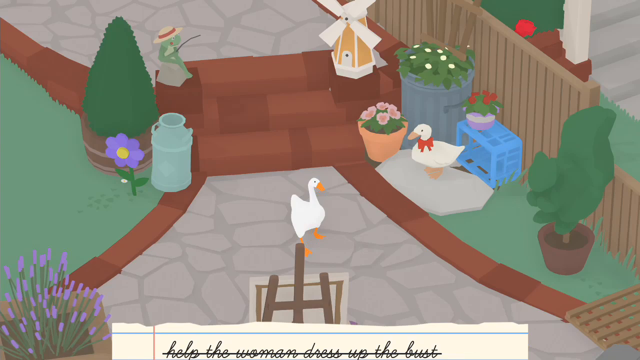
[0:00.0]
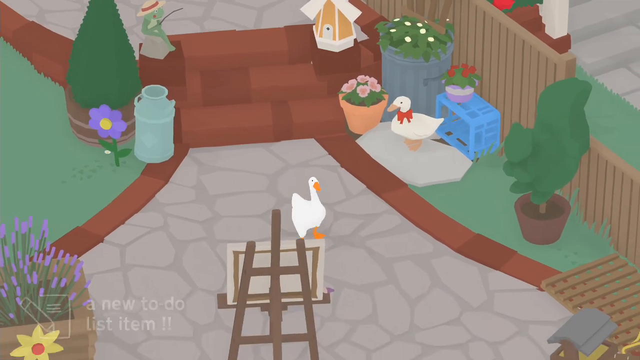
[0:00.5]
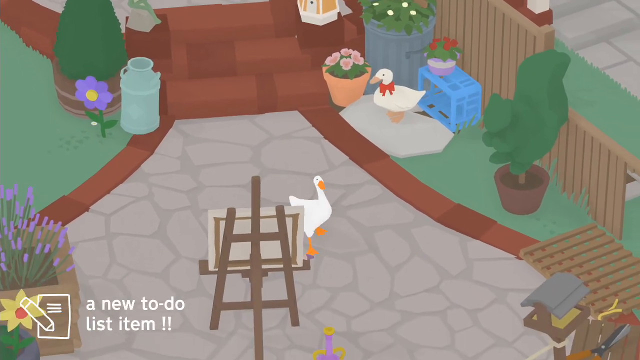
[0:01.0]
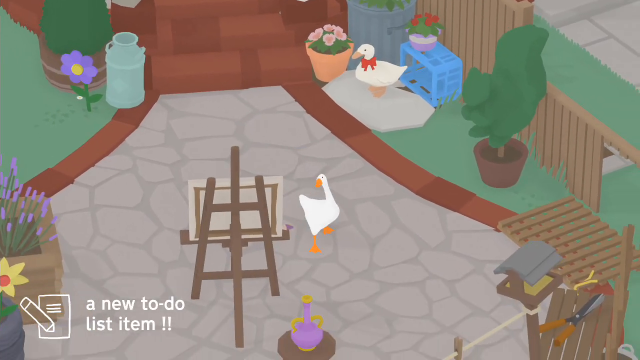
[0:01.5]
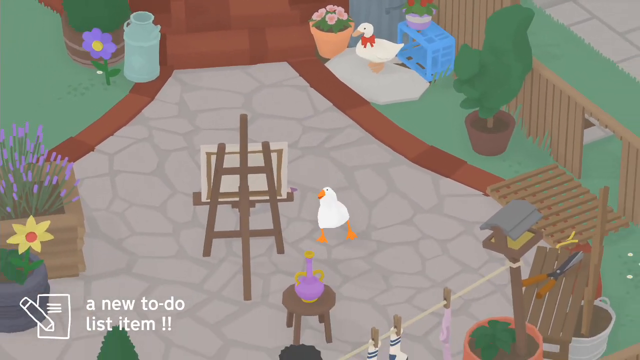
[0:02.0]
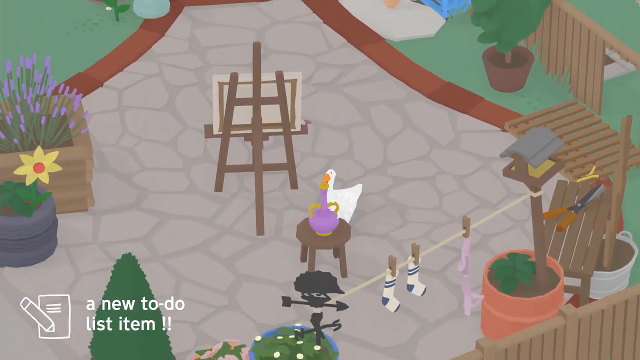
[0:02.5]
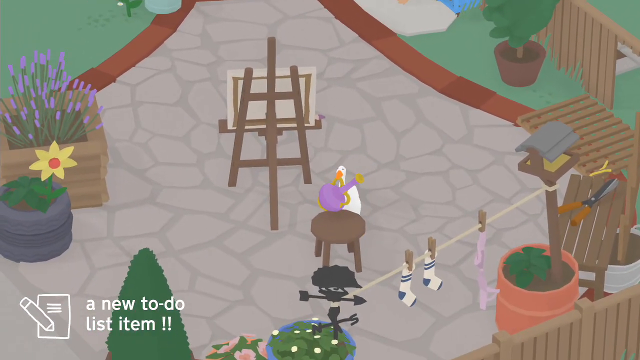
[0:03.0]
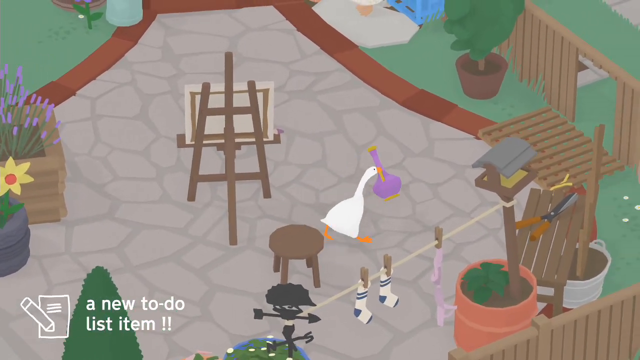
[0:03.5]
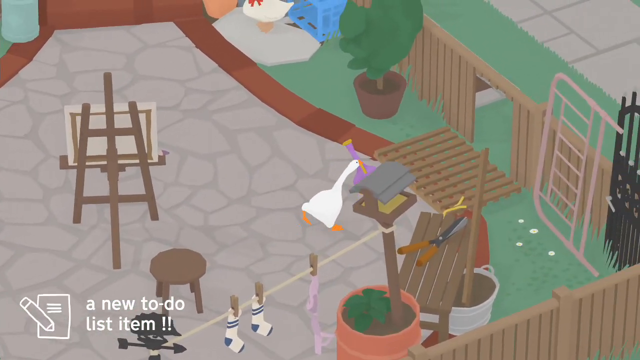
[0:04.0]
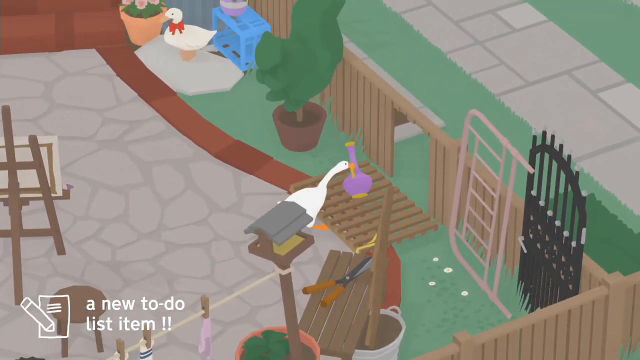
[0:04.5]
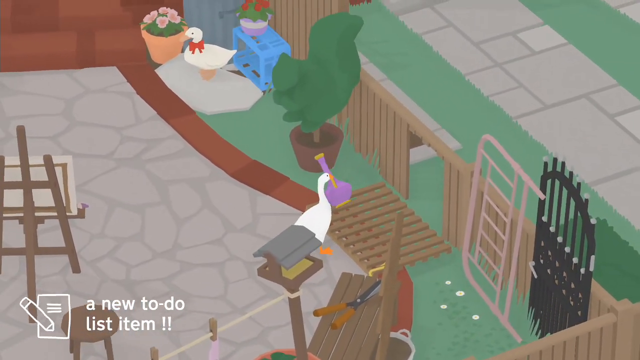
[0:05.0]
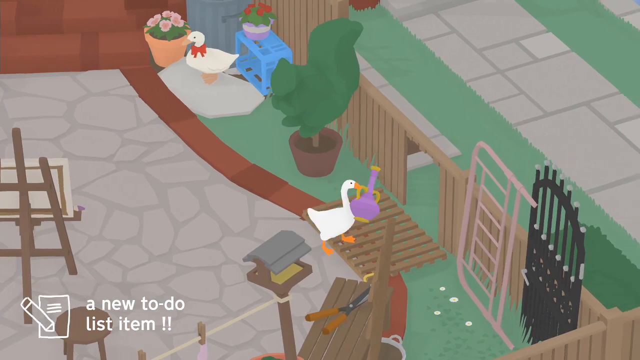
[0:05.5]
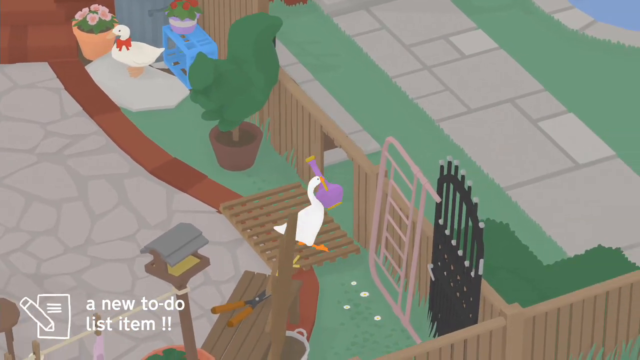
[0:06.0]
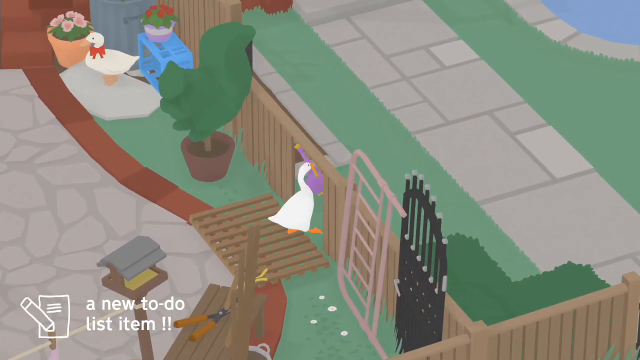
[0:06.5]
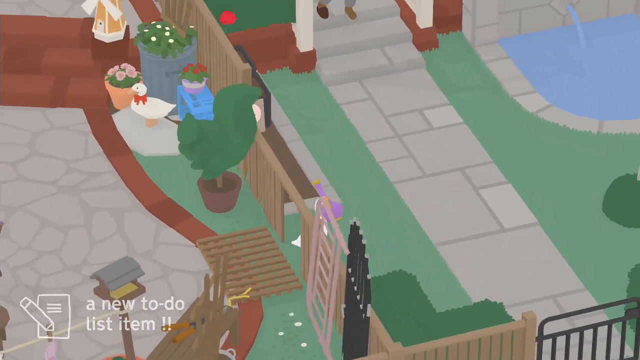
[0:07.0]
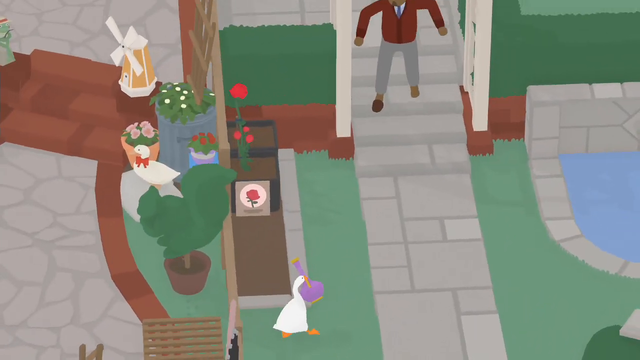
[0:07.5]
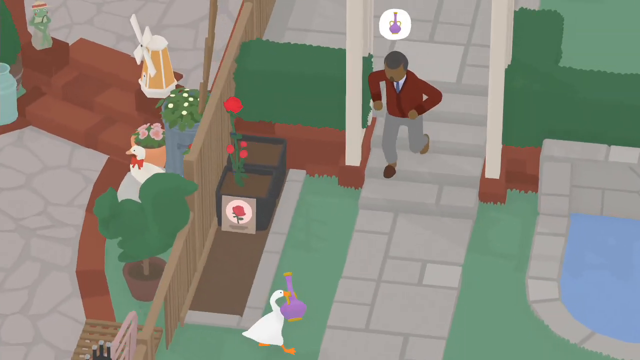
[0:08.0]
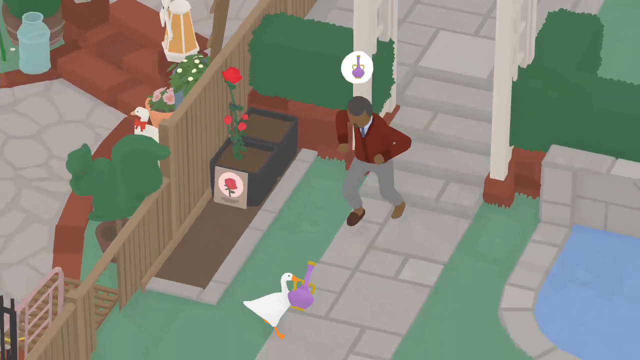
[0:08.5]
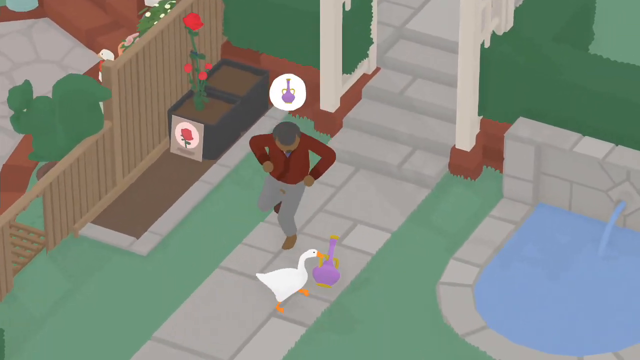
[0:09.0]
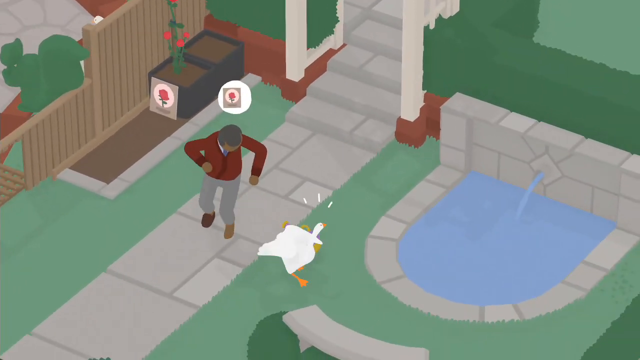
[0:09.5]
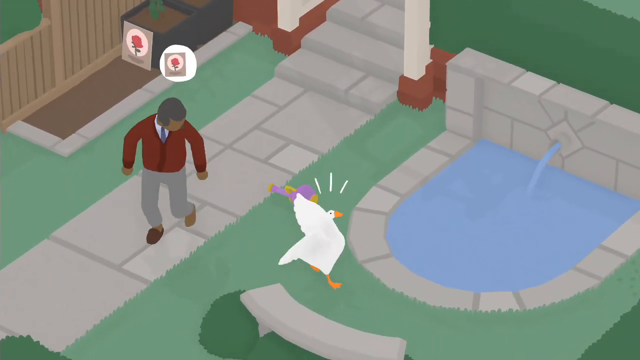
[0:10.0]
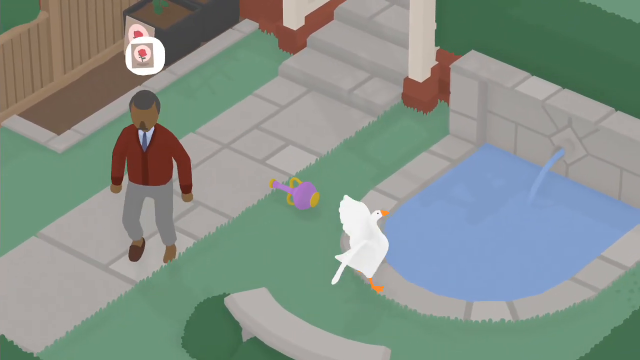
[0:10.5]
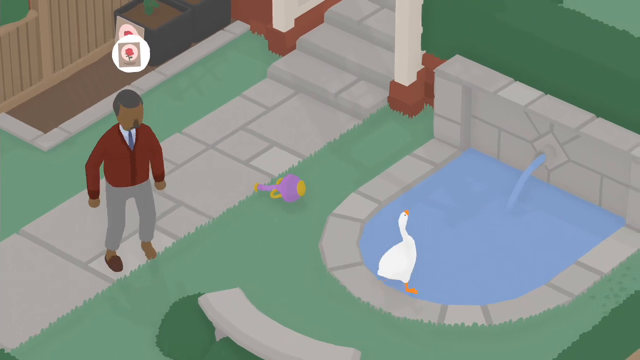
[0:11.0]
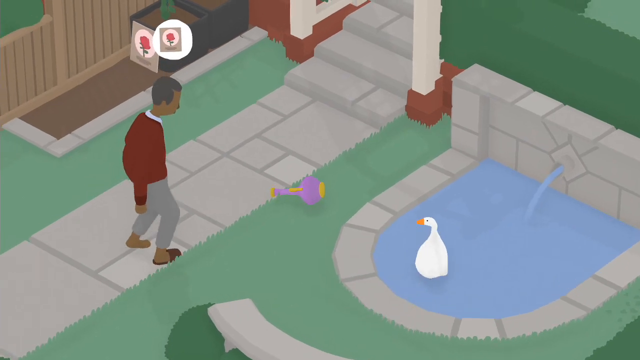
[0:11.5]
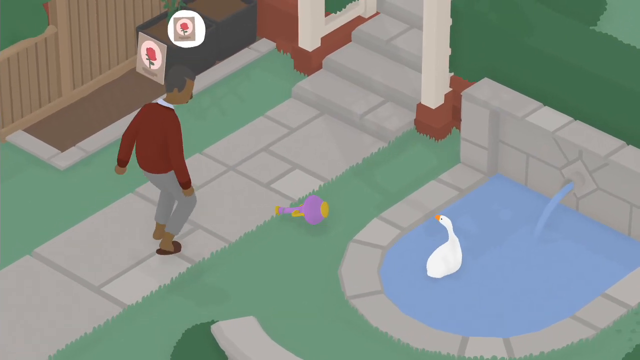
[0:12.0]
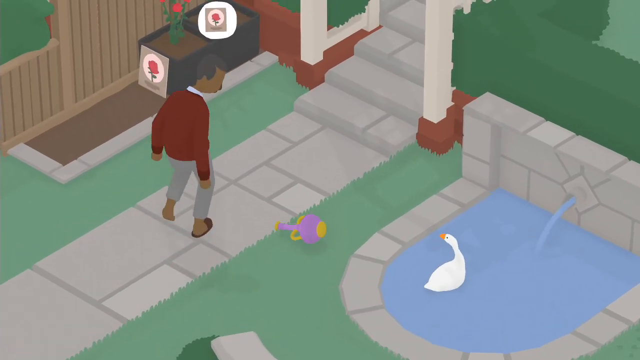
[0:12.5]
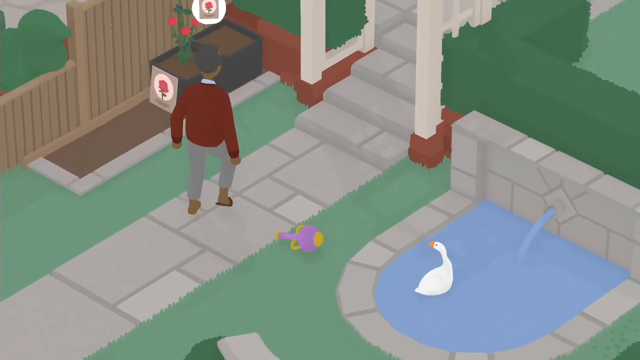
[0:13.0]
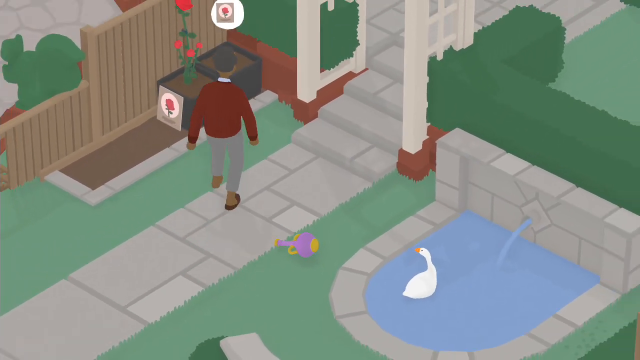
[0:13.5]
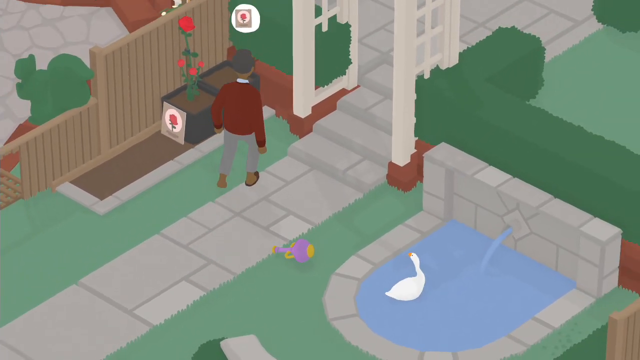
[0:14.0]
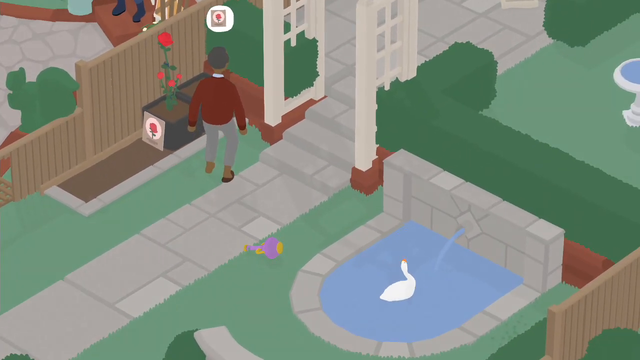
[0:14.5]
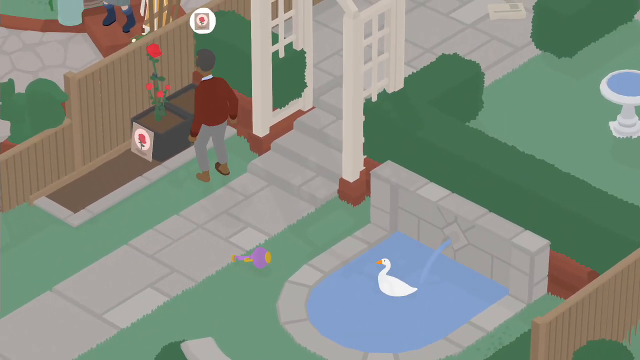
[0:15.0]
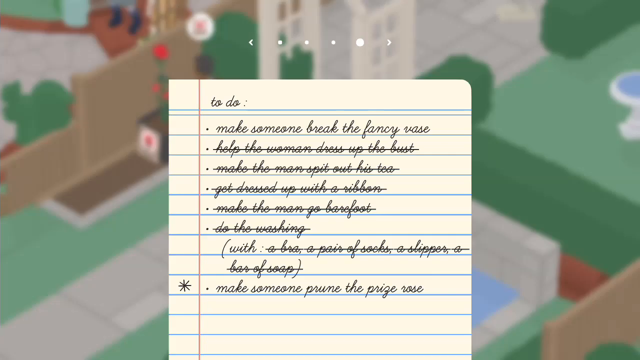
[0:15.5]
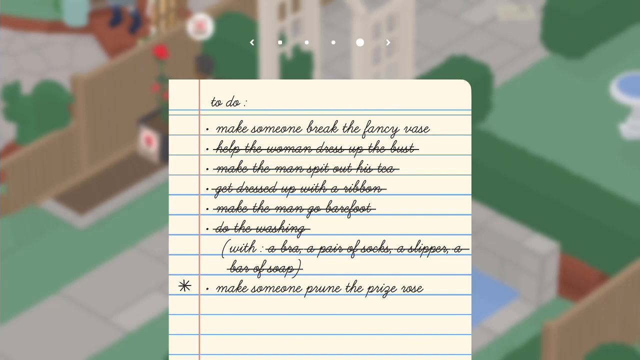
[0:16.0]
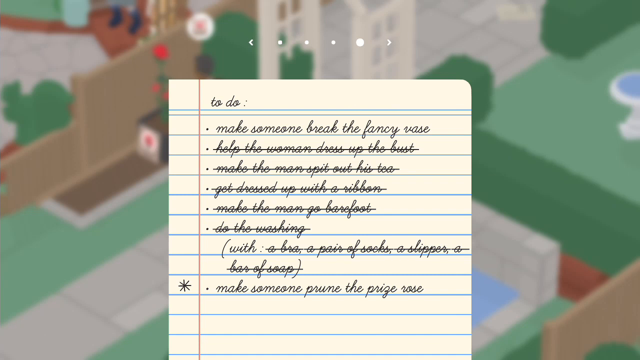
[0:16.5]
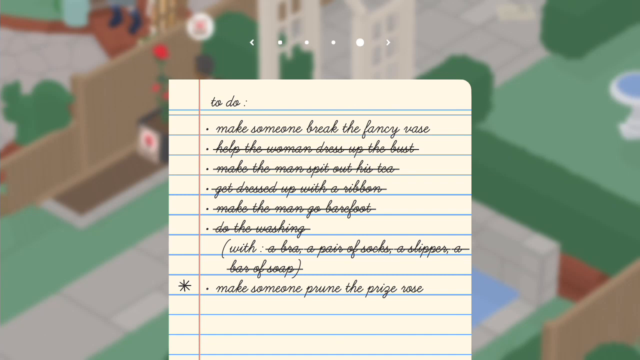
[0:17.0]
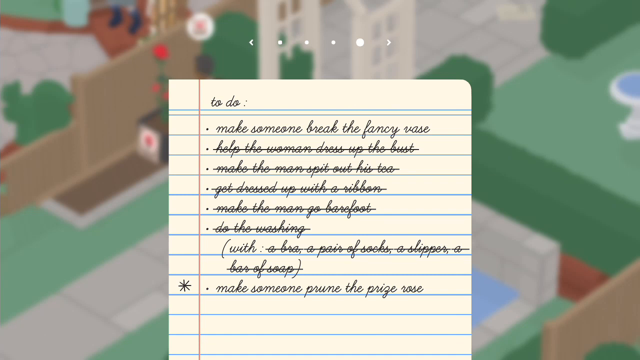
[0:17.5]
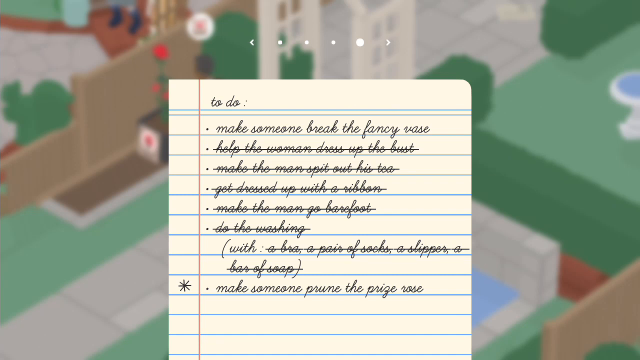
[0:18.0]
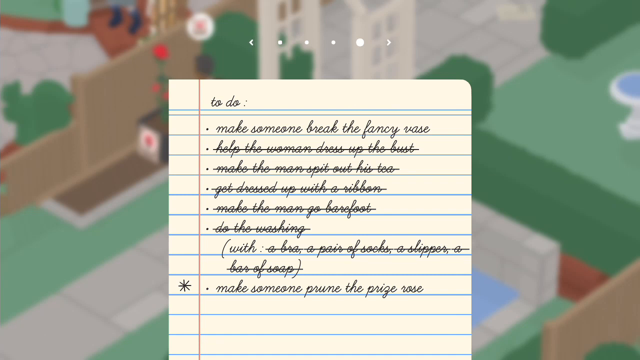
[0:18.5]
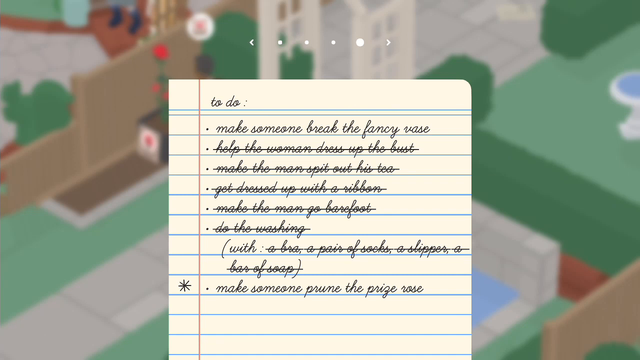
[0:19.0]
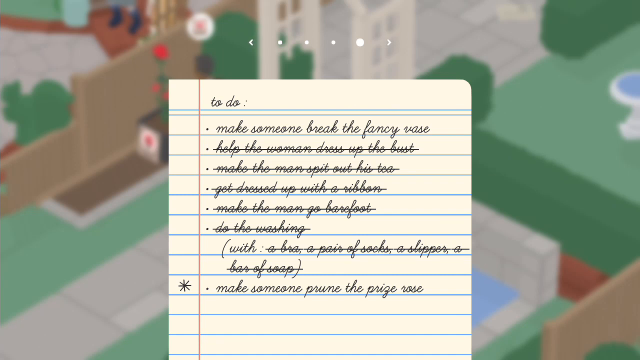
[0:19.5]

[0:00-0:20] The footage comes from a game that appears to be in 3D. Animals are on the screen at the start. A frog wearing a hat sits on a red stairwell, and a windmill is visible on that stairwell. The frog sits on the rock on the left side of the stairwell, next to a paved road; it has red cheeks and holds a fishing rod. As the screen pans down, a goose or duck with a red bow on it sits on a rock on the right side of the road. Various plants and flowers line the side of the road. The camera moves alongside a duck waddling on the main road, where there seems to be a canvas in the middle of the road. The duck then runs very fast, picks up a bottle or vase with its beak, and seems to walk toward a wooden doorway. It walks through the doorway and runs through the fence. It also runs into a person who has the same icon as the vase that was picked up; the person seems very angry and follows the duck. The man wears a tie, long pants and a sweater. The duck drops the purple vase.